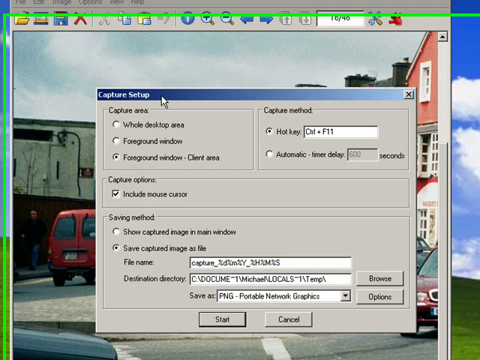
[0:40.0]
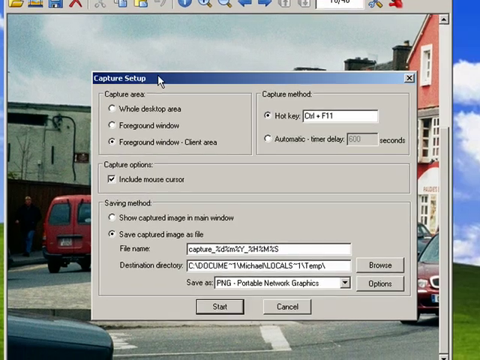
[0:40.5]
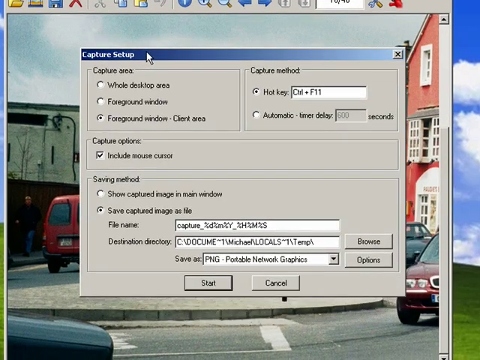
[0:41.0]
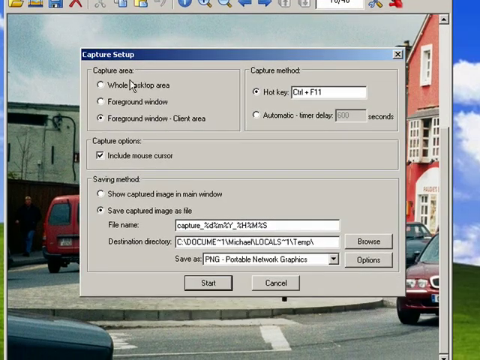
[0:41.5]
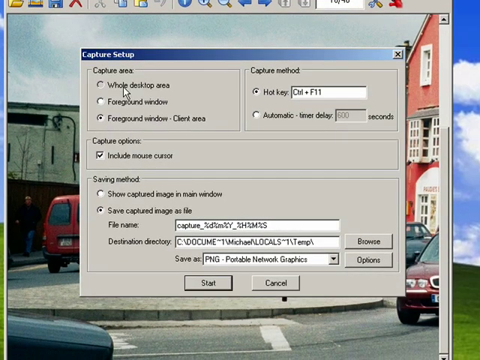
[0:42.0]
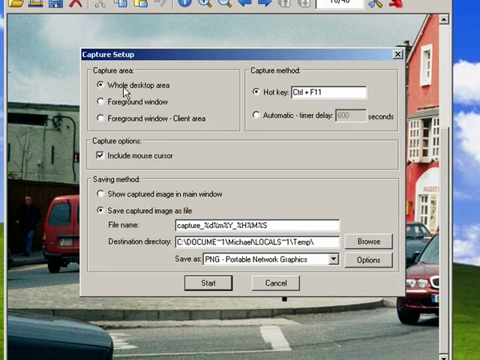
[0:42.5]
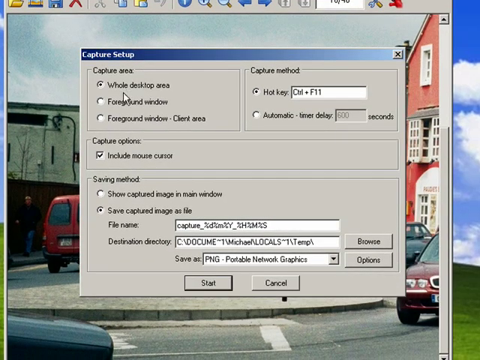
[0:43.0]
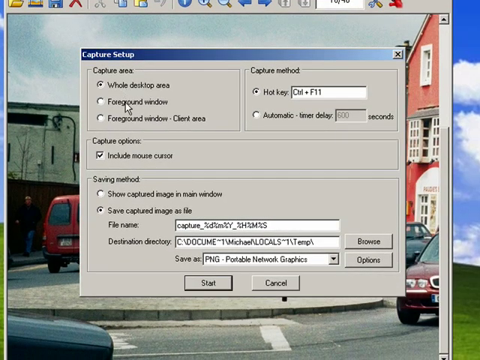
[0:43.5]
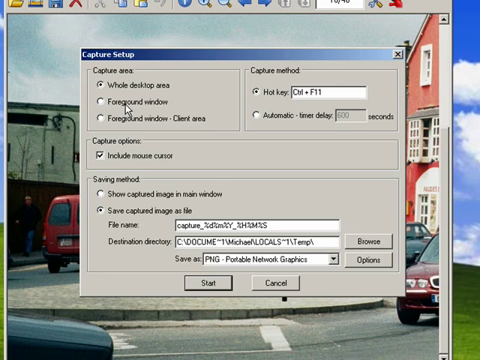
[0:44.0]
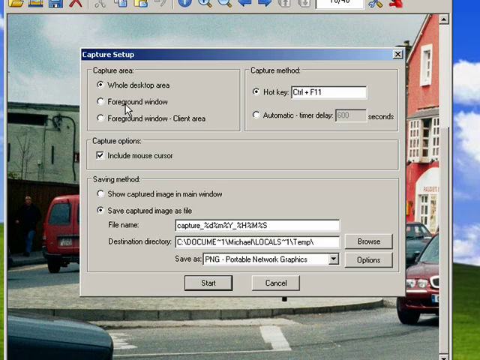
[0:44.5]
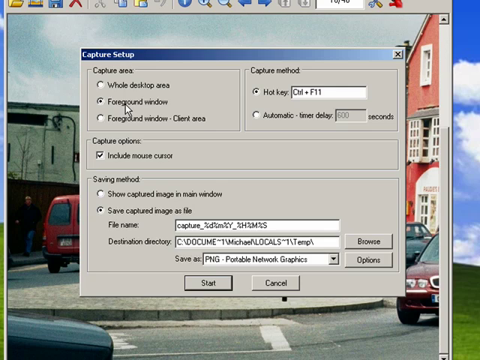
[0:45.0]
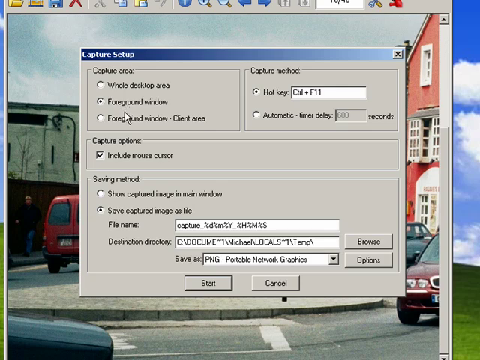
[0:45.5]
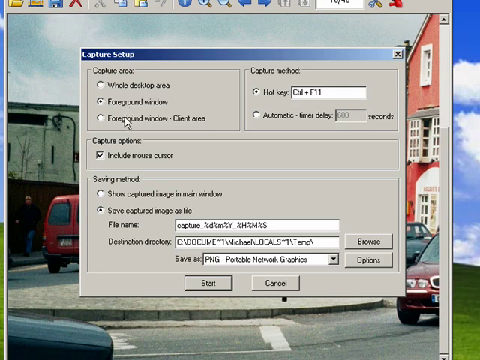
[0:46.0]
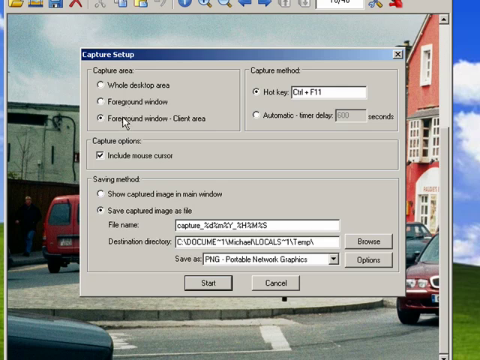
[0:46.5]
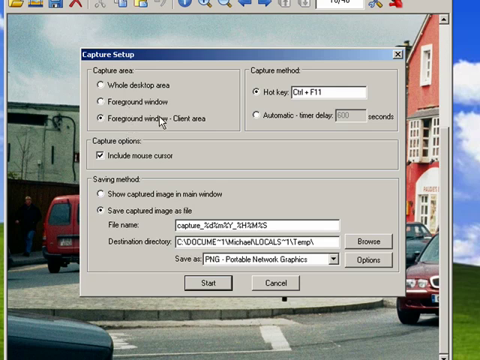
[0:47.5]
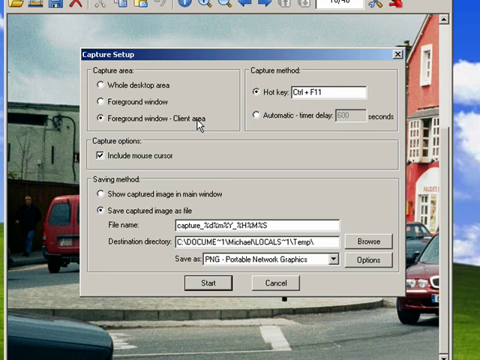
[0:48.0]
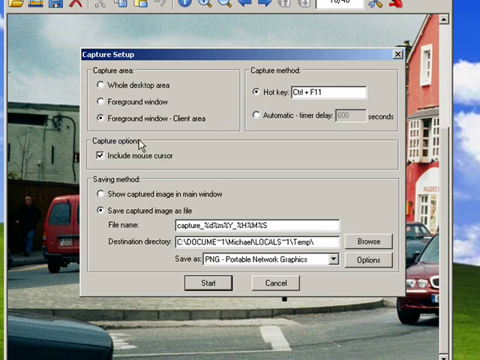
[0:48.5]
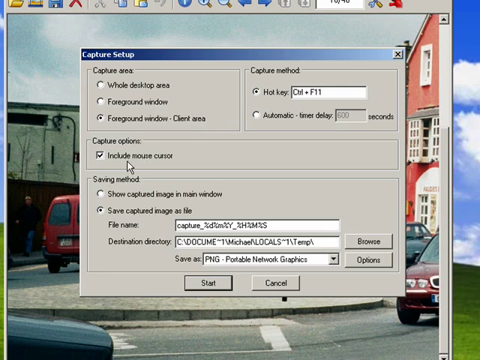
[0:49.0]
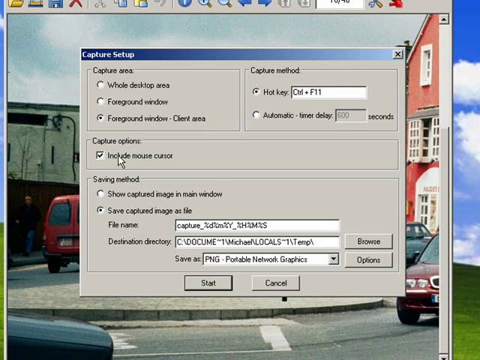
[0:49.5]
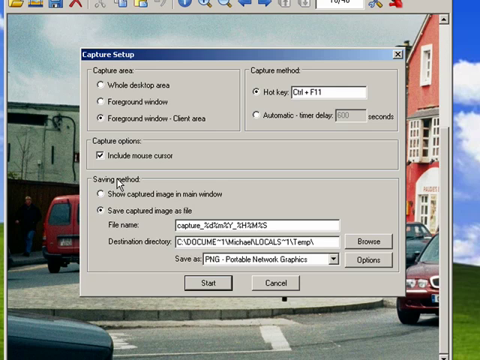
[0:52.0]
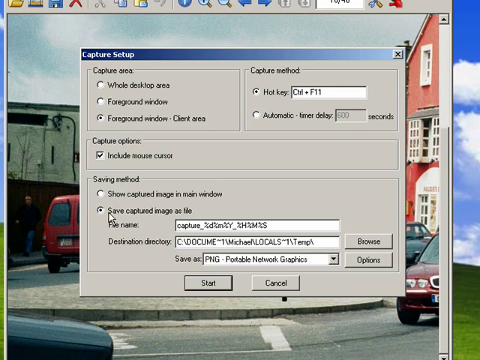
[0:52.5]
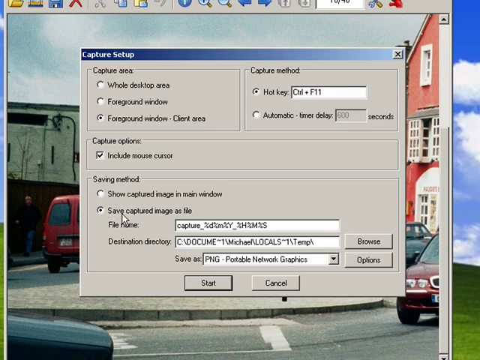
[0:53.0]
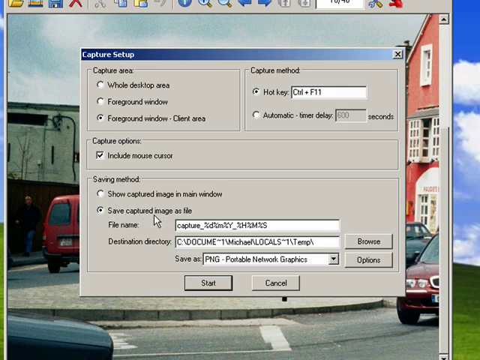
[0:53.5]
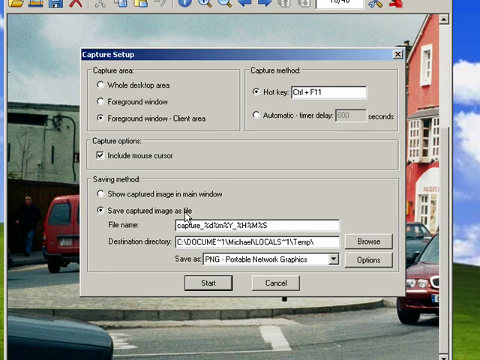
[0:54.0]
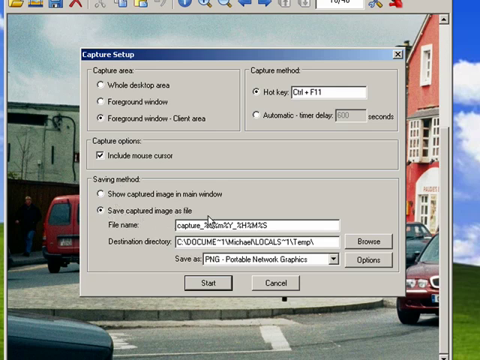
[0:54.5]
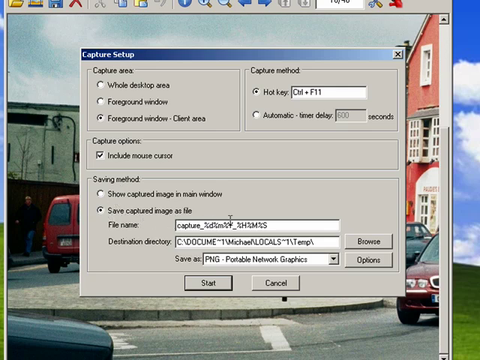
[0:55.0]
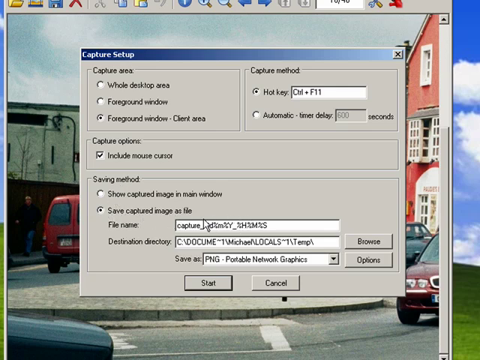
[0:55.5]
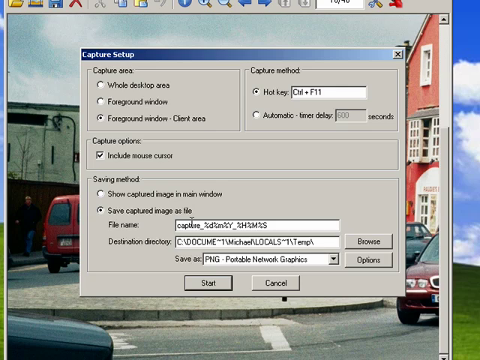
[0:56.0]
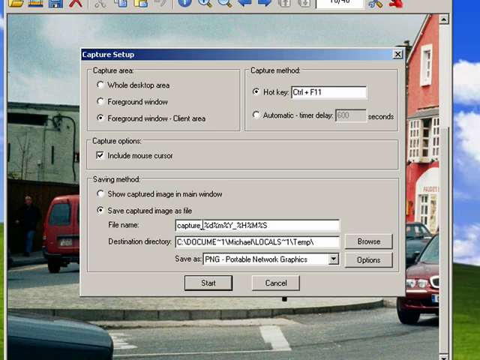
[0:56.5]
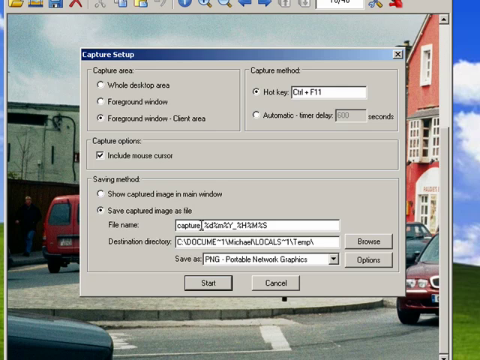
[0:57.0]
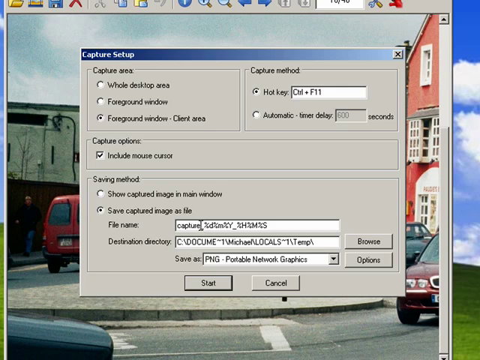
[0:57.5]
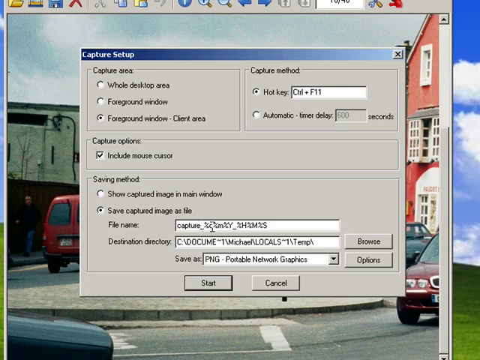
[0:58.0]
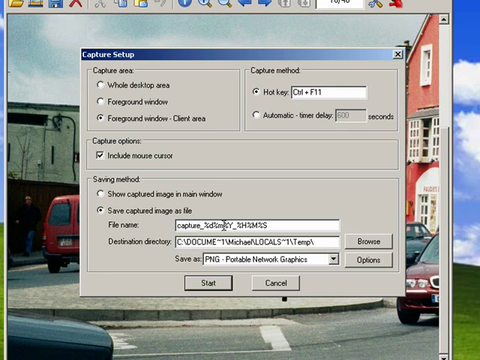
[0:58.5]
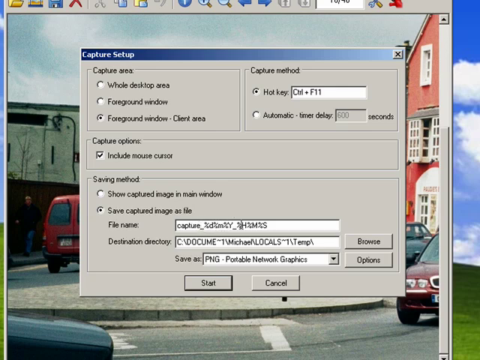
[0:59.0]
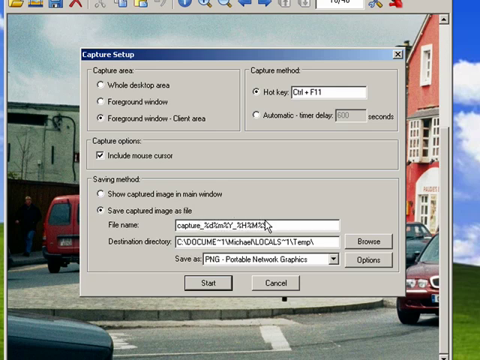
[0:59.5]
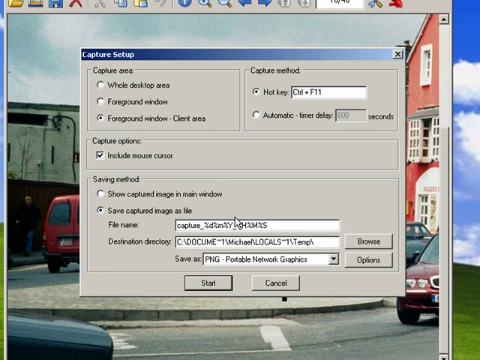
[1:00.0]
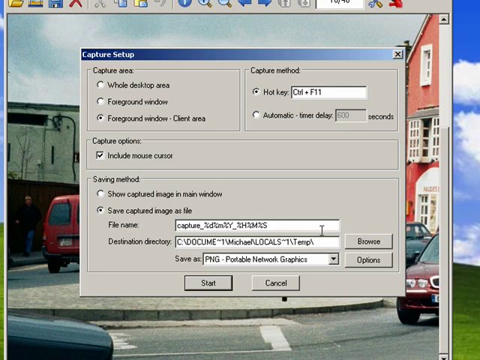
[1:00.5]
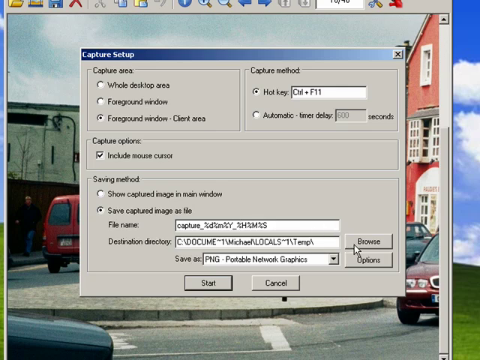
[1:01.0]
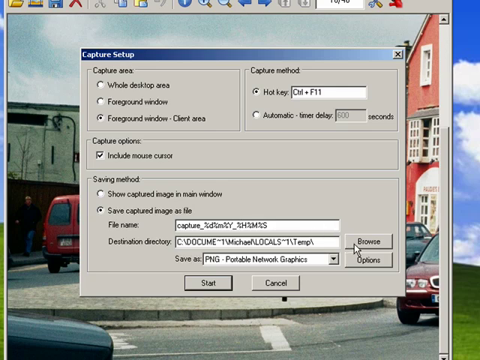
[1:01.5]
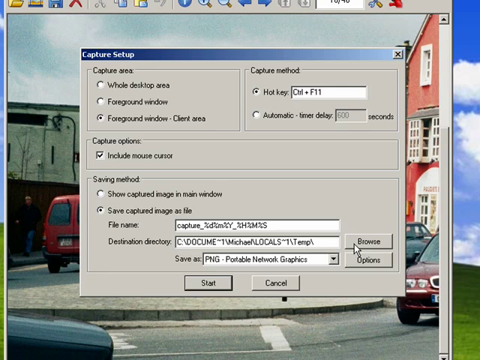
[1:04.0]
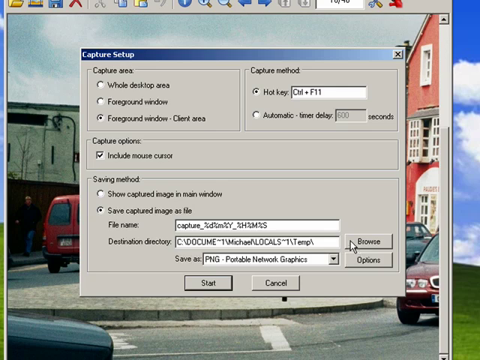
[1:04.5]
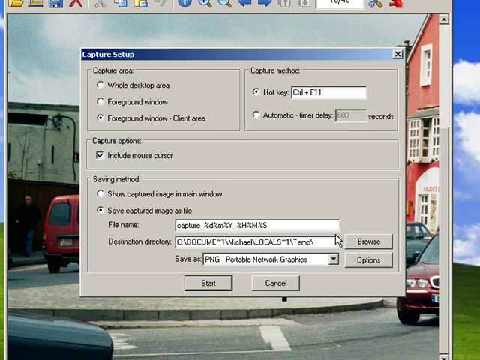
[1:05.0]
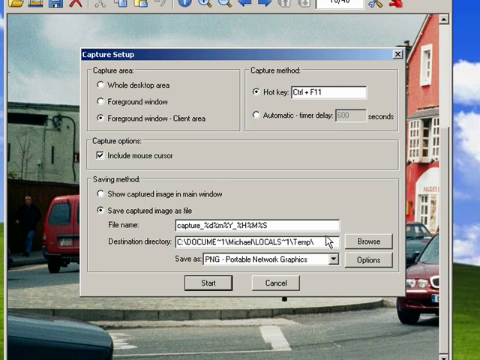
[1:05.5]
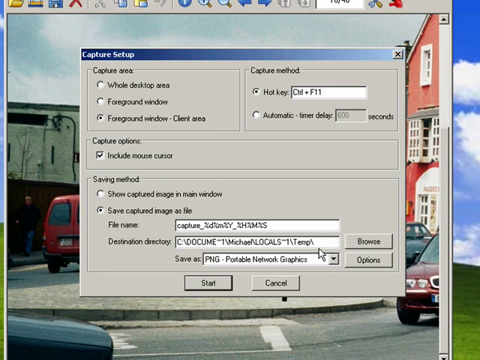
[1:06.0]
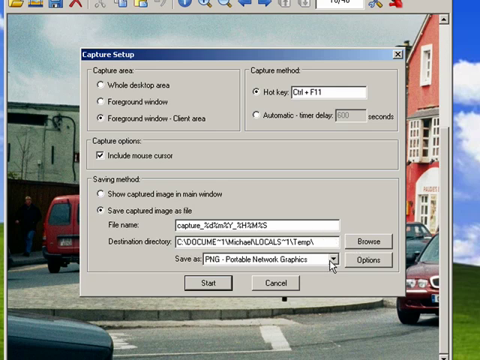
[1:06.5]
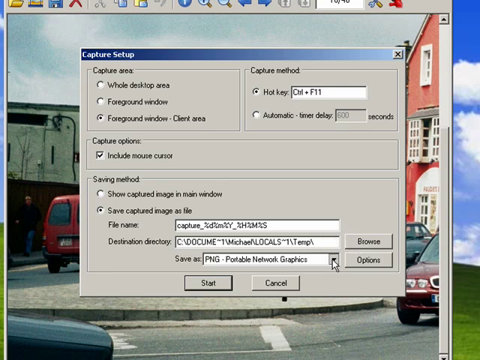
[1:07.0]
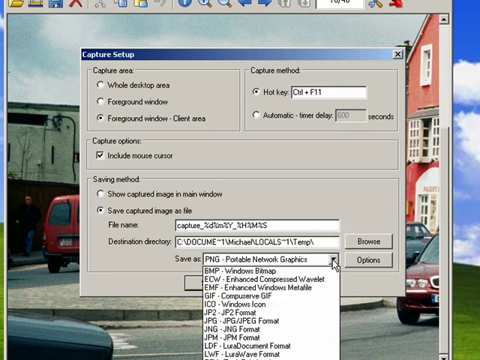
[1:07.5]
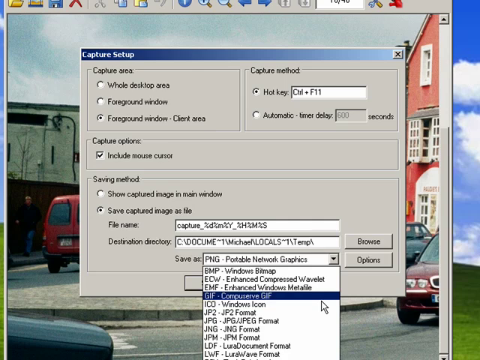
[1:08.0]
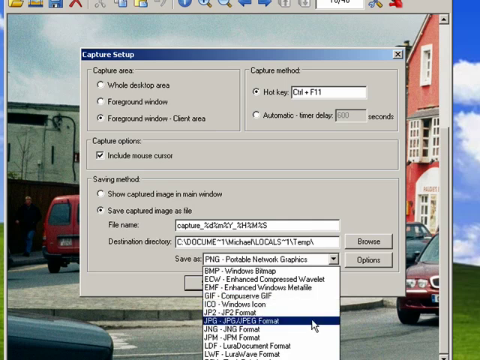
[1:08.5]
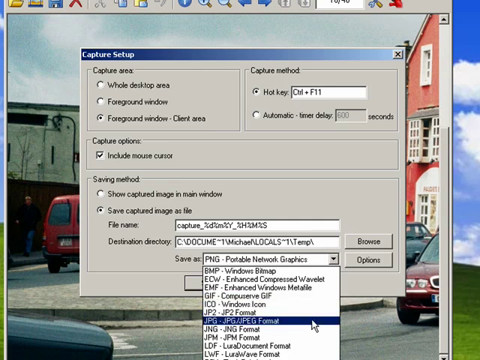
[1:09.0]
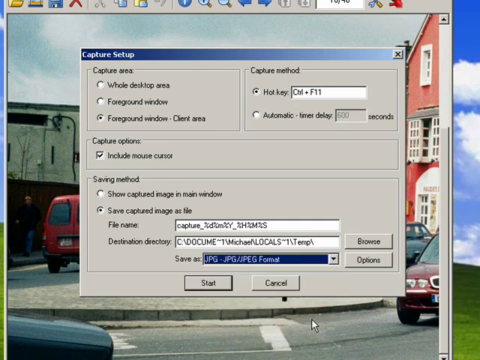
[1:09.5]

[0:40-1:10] The screen focuses on the capture setup window. The window is fairly old in layout and structure, with a light gray background and several sections: capture area, capture method, capture options and saving method. At the bottom are two buttons, "Start" and "Cancel". The mouse hovers over the capture area settings, which include whole desktop area, foreground window, and foreground window plus chart area, and clicks on foreground window plus chart area. It then moves down to capture options, where "Include mouse cursor" is checked, and then to the bottom-most section, the saving method, where it clicks on "Save capture image on file". He hovers over the file name and destination directory. The mouse then clicks on the options menu in the save-as part, and a drop-down menu offers several file types, including PNG and JPEG. He selects JPEG.